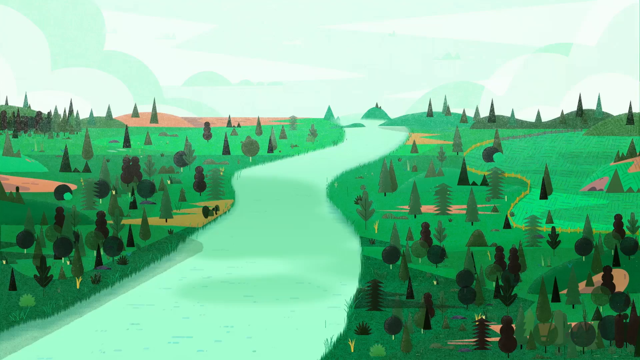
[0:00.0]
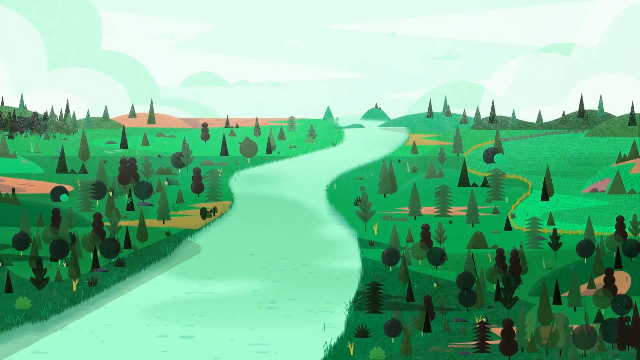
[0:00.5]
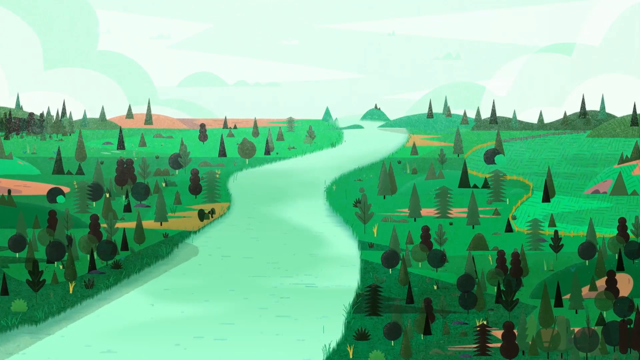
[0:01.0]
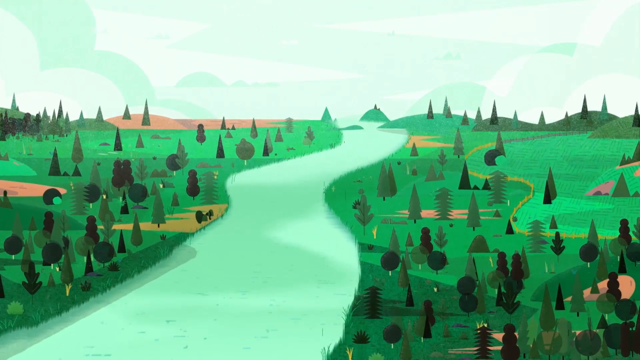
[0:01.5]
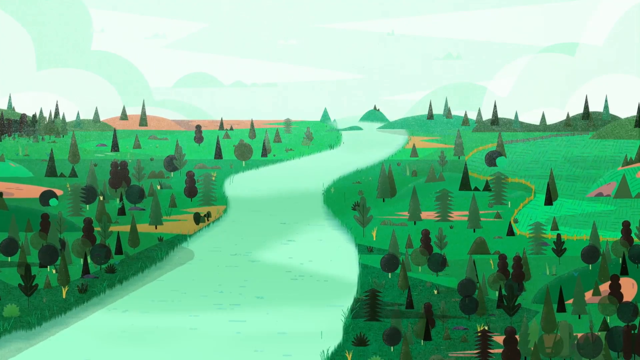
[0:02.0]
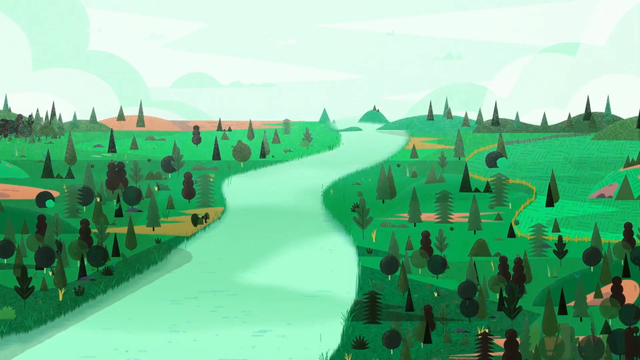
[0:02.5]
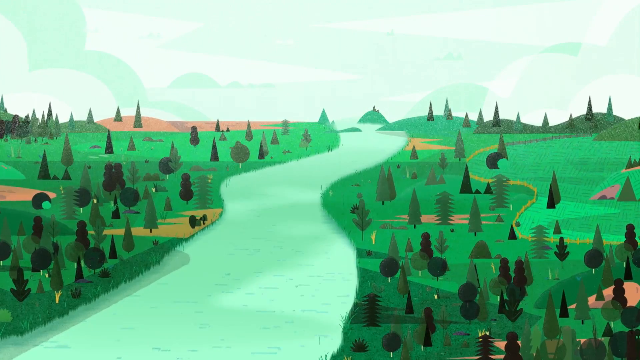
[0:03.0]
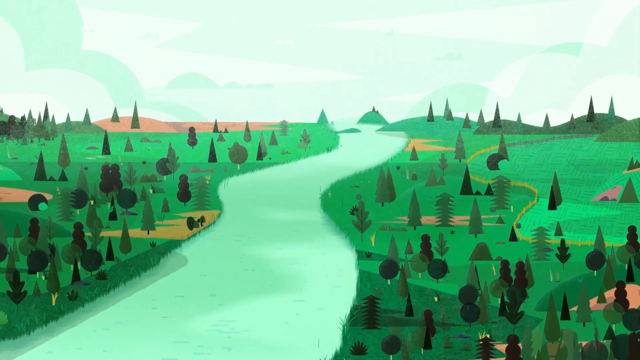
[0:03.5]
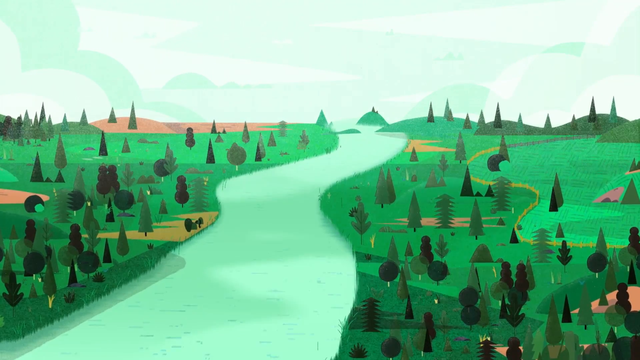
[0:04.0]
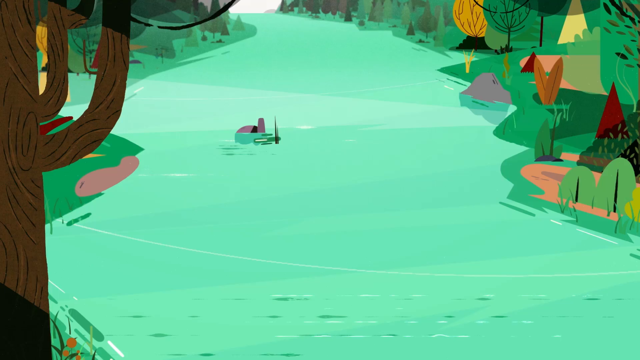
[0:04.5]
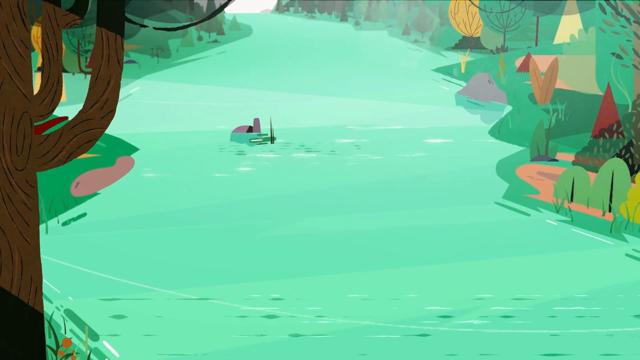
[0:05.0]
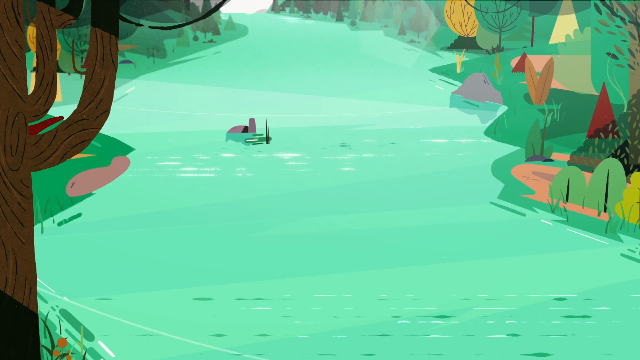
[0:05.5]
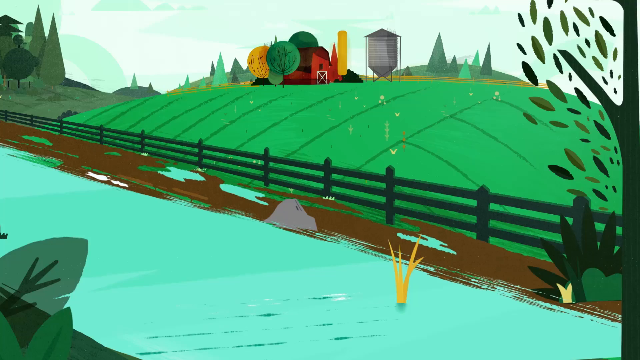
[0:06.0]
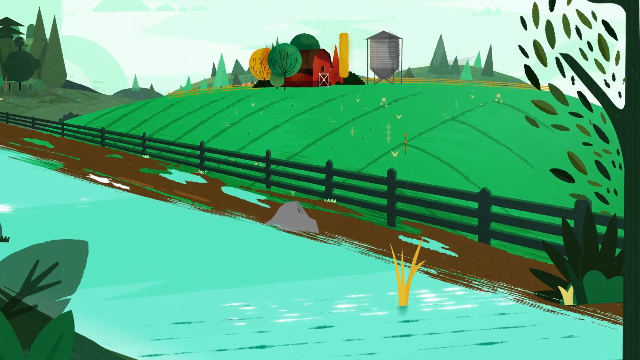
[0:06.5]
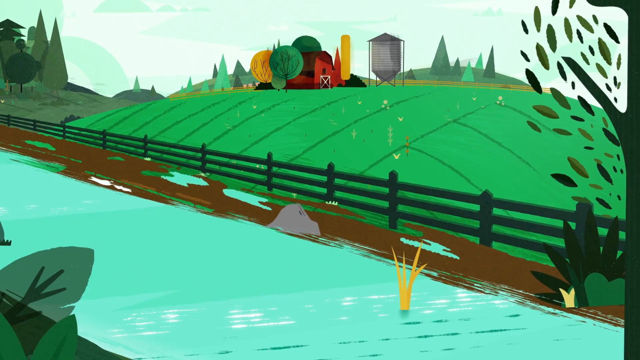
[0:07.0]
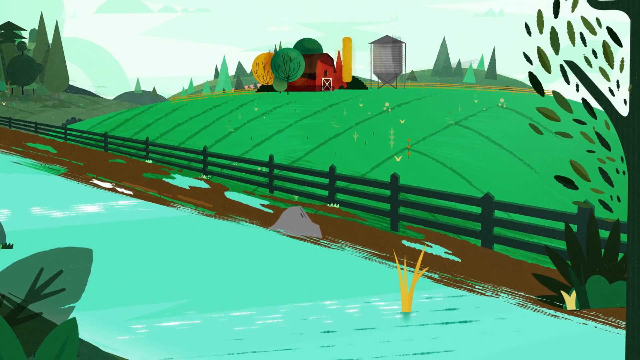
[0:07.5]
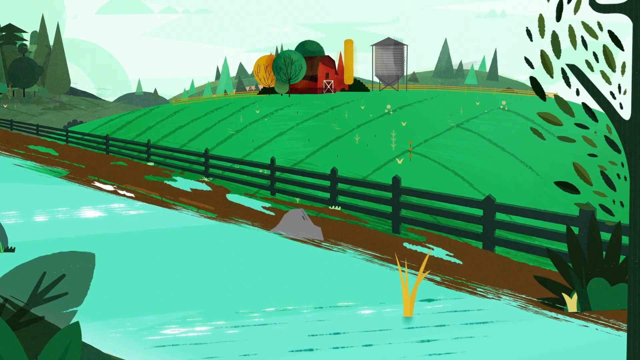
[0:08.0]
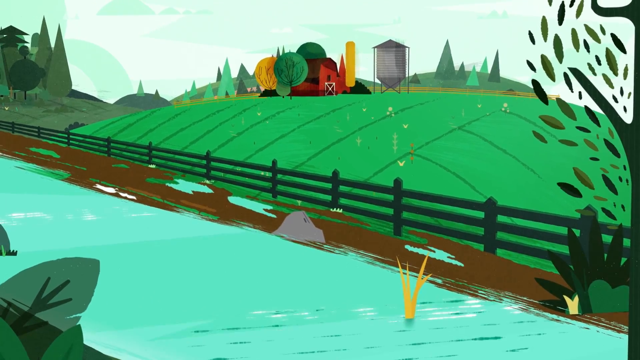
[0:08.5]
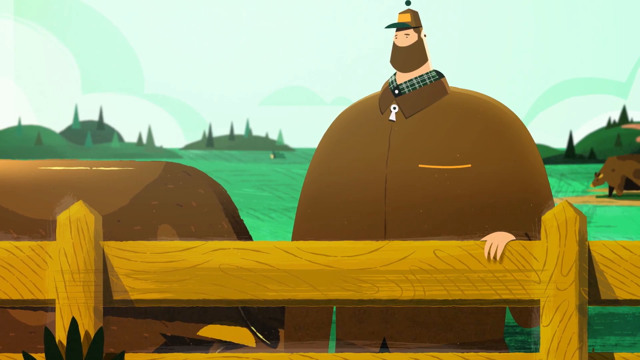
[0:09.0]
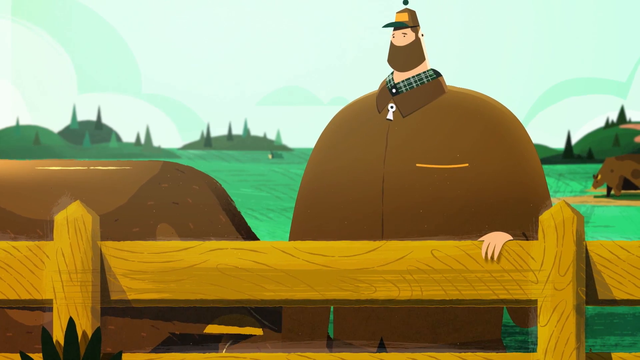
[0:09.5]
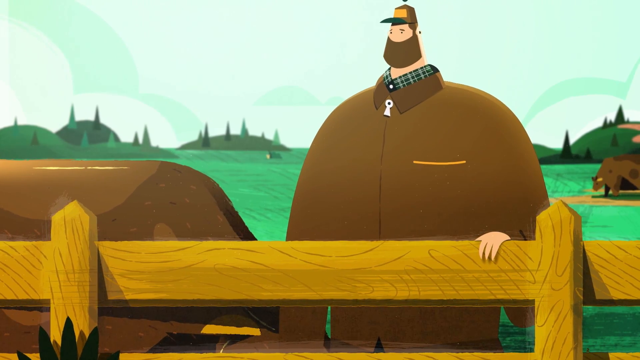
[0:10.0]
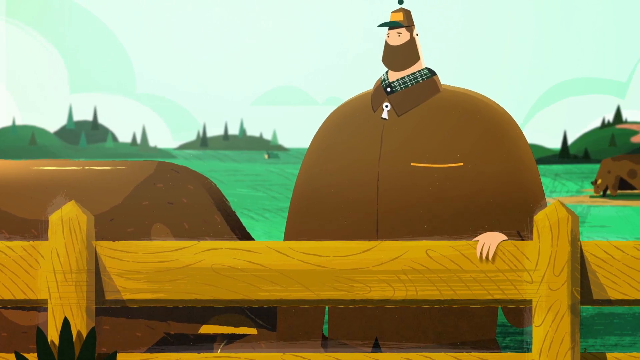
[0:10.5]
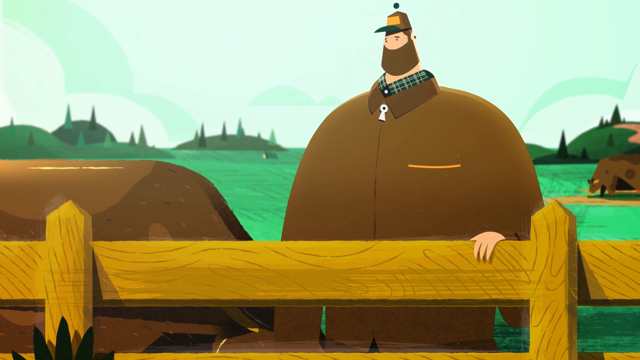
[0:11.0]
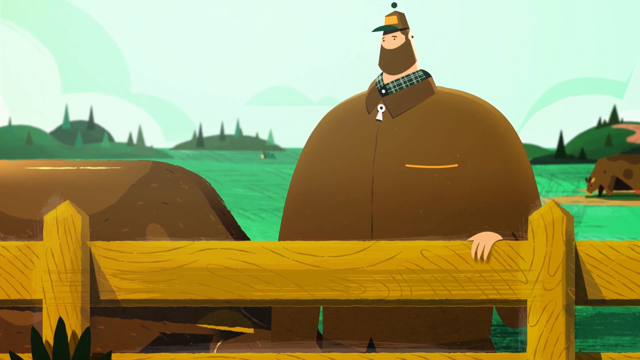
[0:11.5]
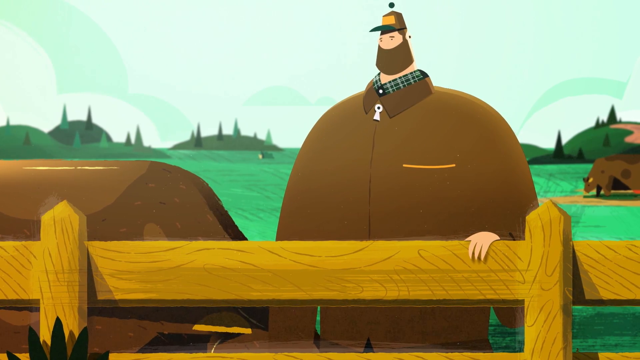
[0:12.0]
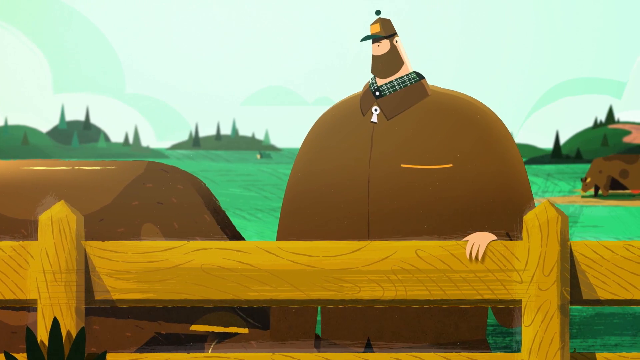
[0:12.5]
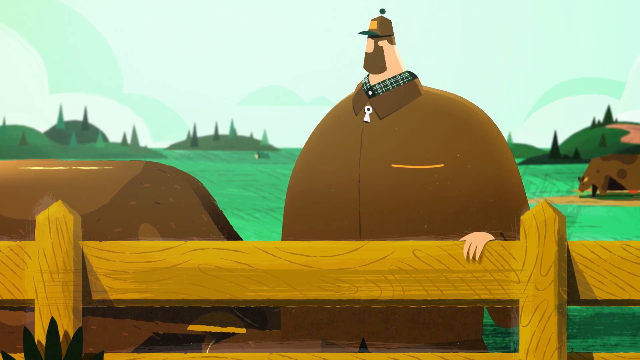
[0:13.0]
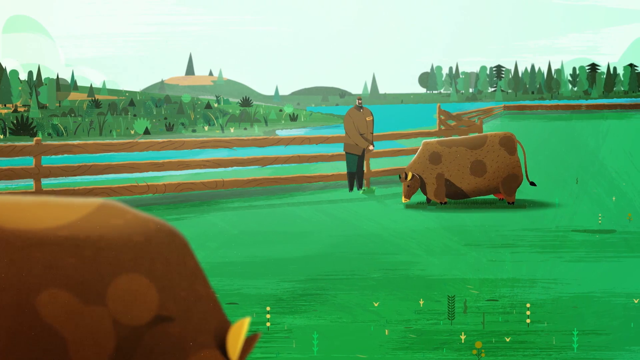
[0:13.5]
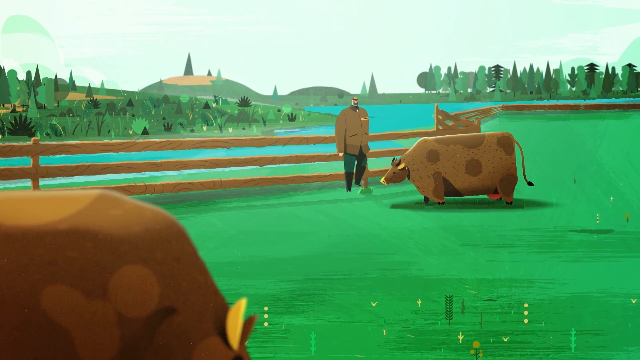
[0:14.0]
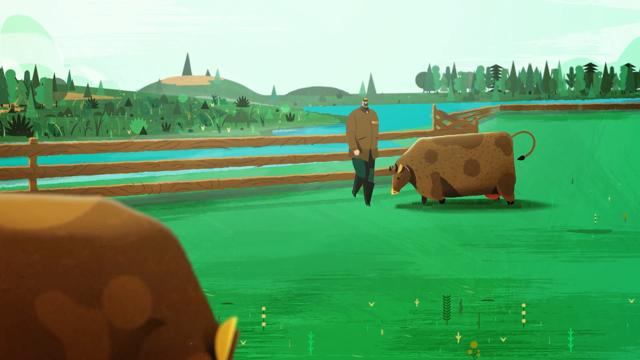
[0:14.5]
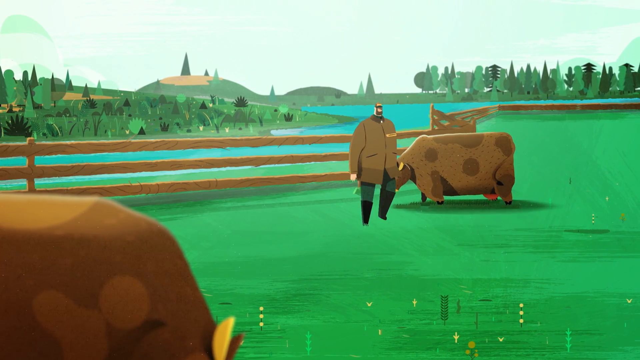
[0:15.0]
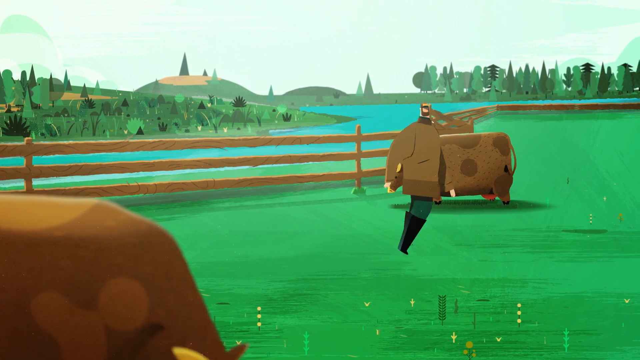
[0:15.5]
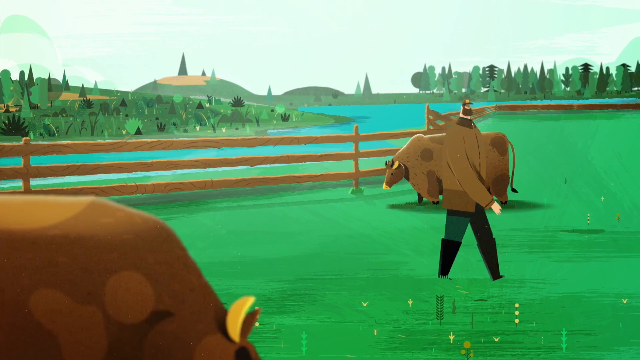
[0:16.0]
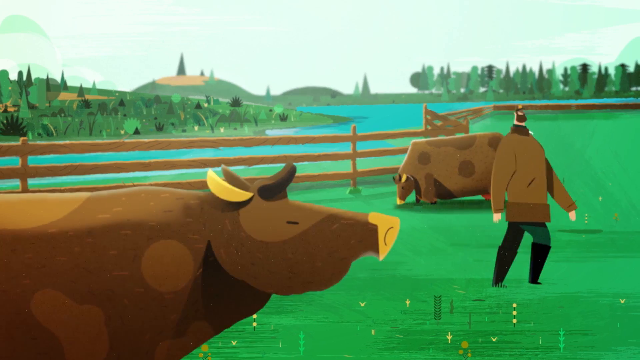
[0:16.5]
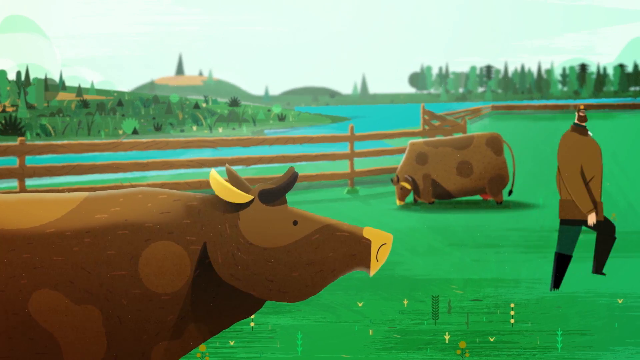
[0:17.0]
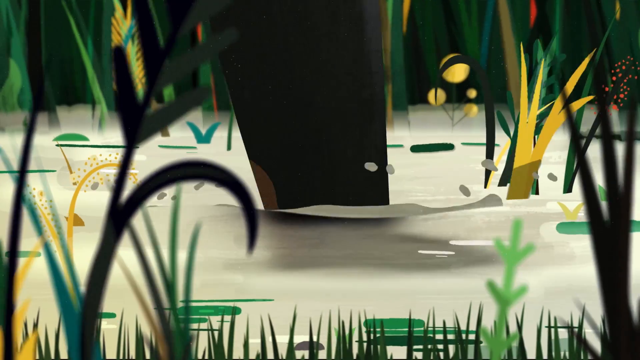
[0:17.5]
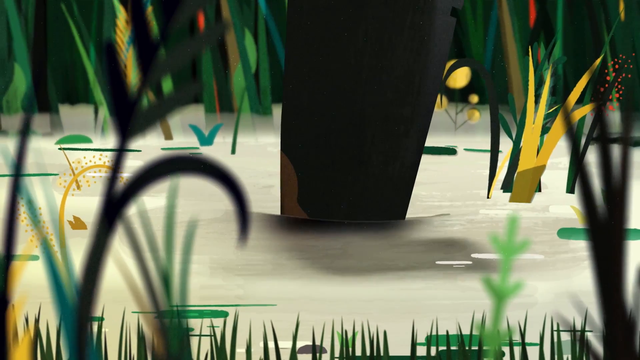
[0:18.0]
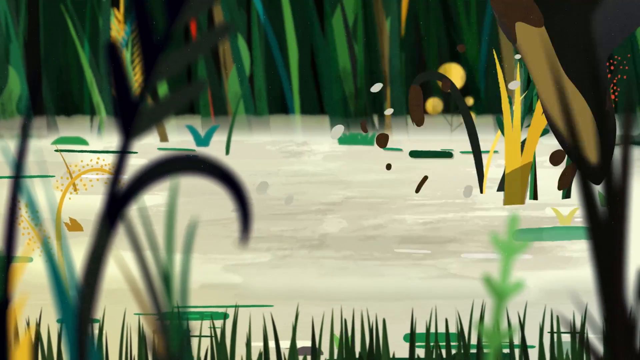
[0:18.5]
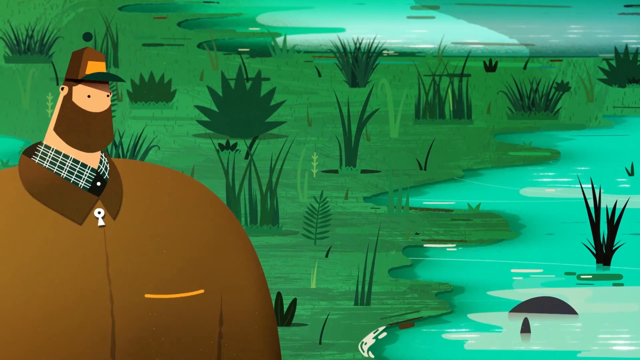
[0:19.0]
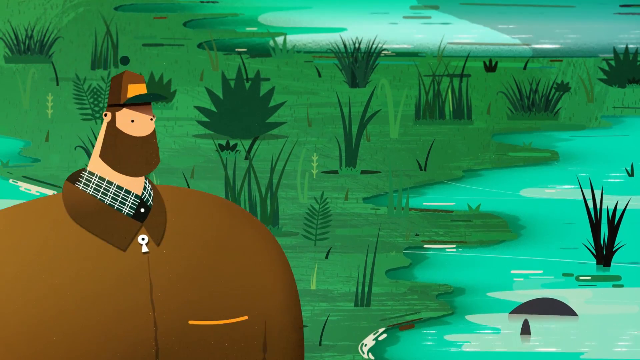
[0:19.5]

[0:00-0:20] The video is animated. It opens on an almost forest-like area with a bunch of trees on either side, and between the trees is what looks like a river or lake flowing through. The shot is an up-close view of that river area. It then shows what looks like a farm in the background with a man in the foreground. It cuts to the man standing behind a post with his left hand on the post; he is perhaps a farmer overlooking the land. He wears a brown jacket and is looking down. A brown cow is on the left side of the screen and another brown cow is in the background to the right. The man kind of sighs and looks a little sad. He turns around, and a different shot shows him walking toward the camera past a brown cow. He continues walking out of frame, and then he is shown stomping through some water area.